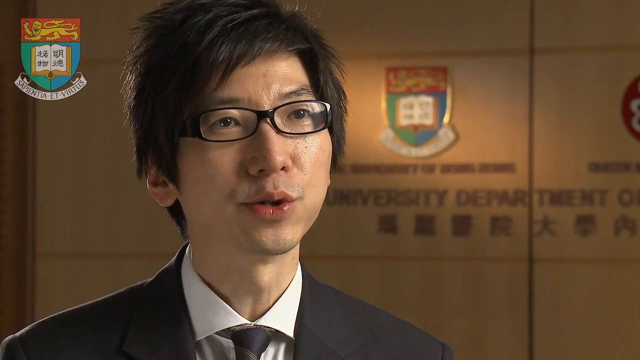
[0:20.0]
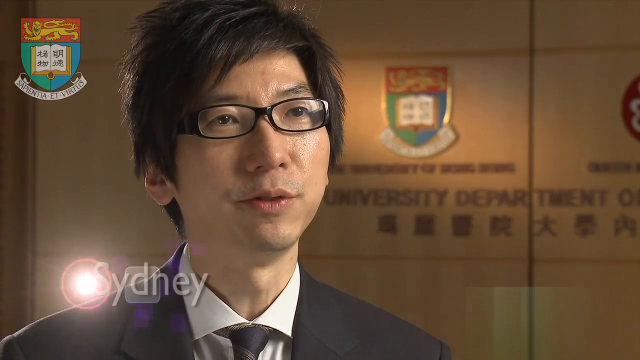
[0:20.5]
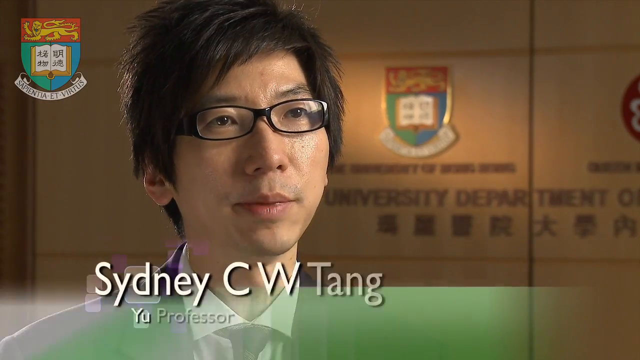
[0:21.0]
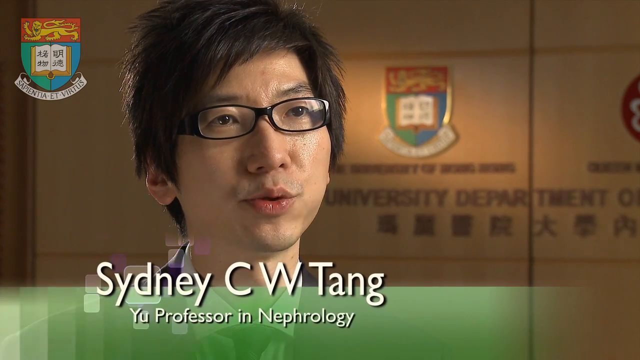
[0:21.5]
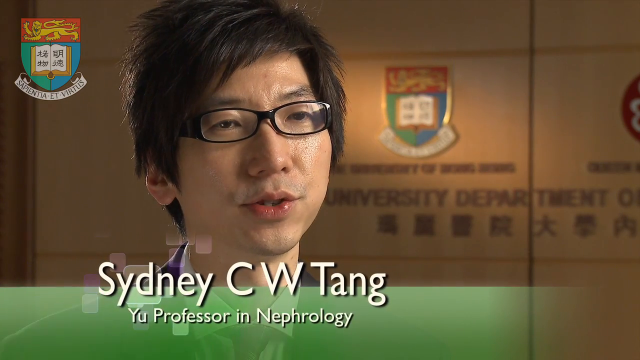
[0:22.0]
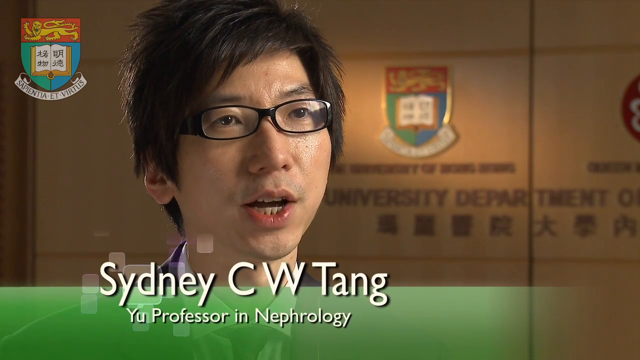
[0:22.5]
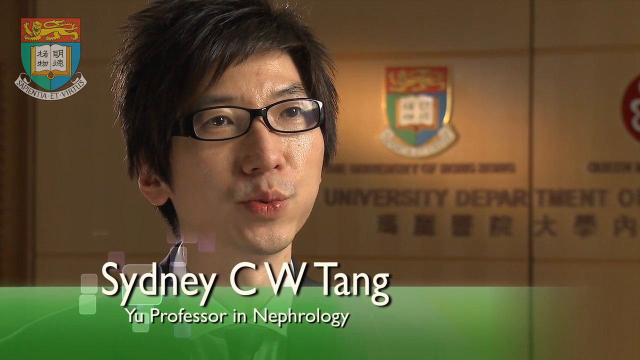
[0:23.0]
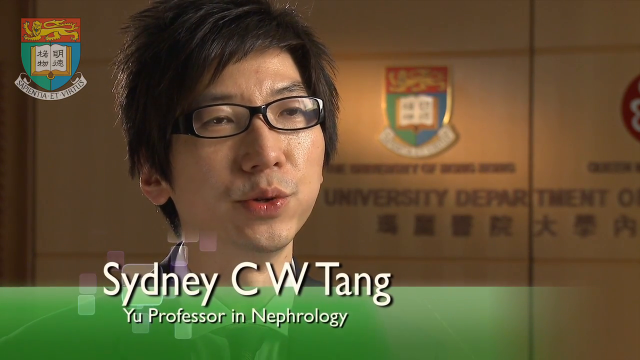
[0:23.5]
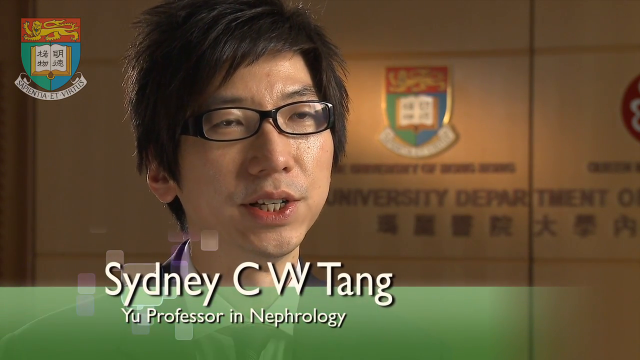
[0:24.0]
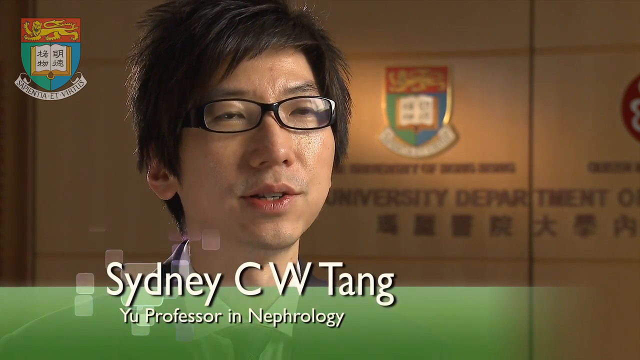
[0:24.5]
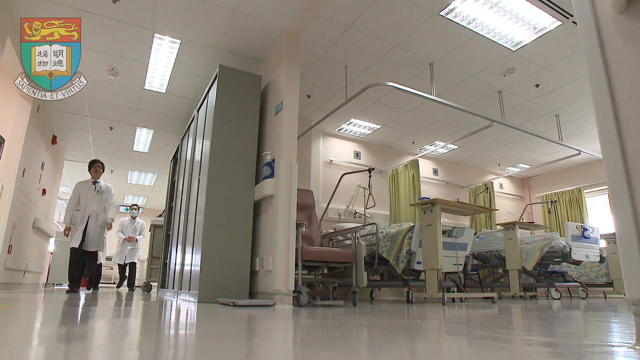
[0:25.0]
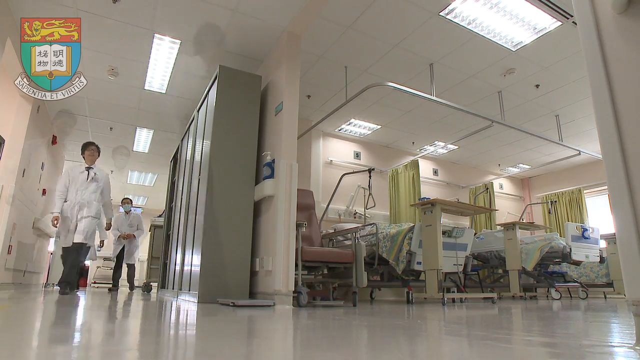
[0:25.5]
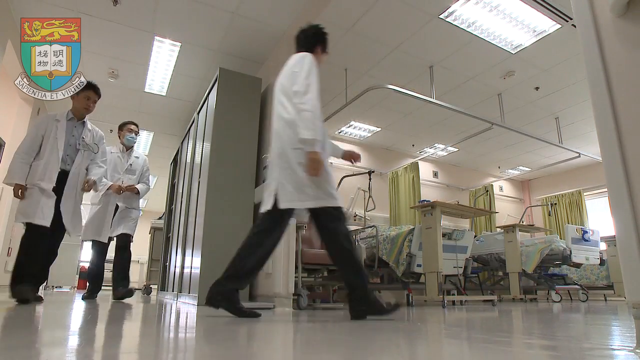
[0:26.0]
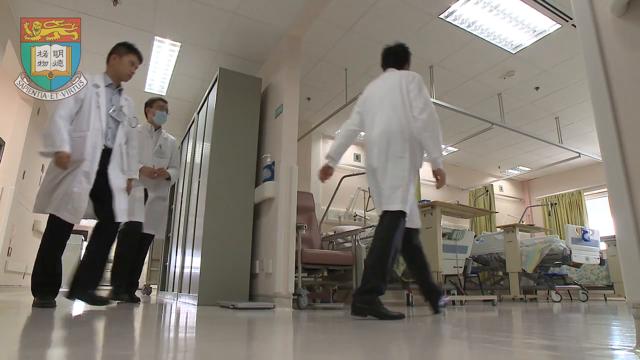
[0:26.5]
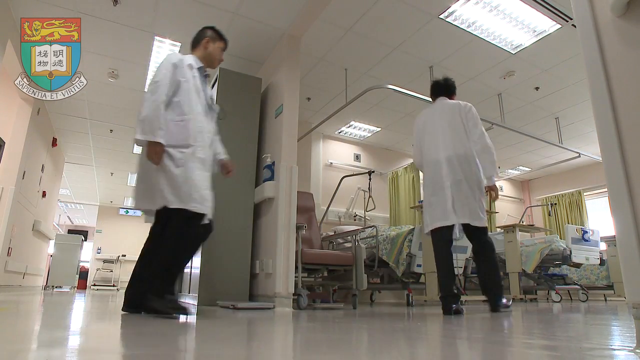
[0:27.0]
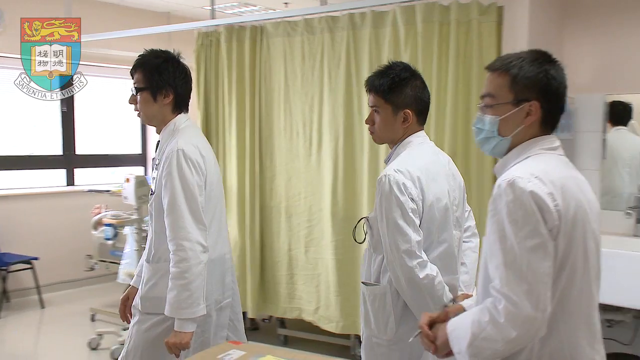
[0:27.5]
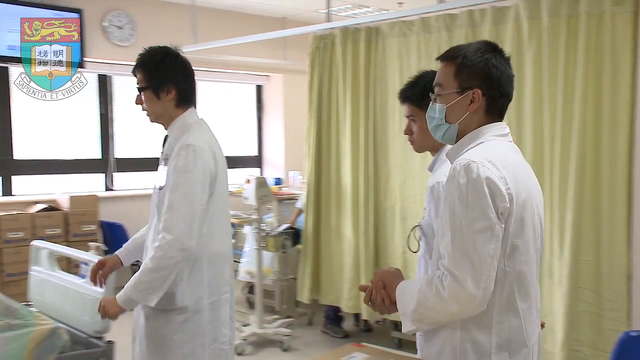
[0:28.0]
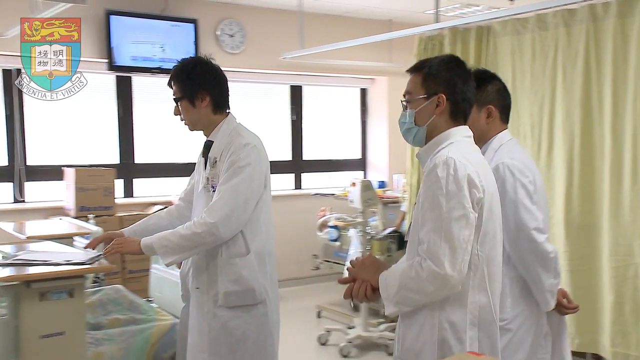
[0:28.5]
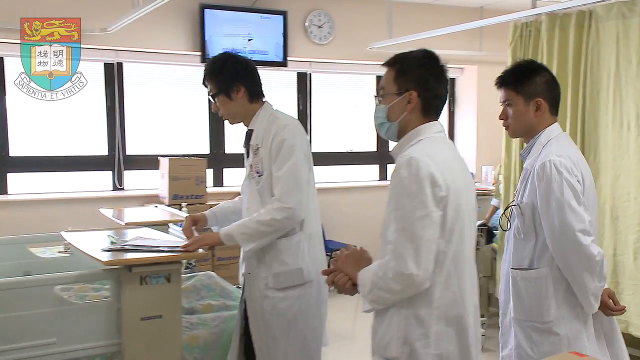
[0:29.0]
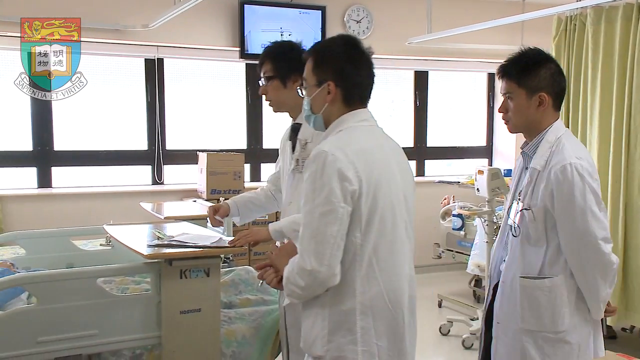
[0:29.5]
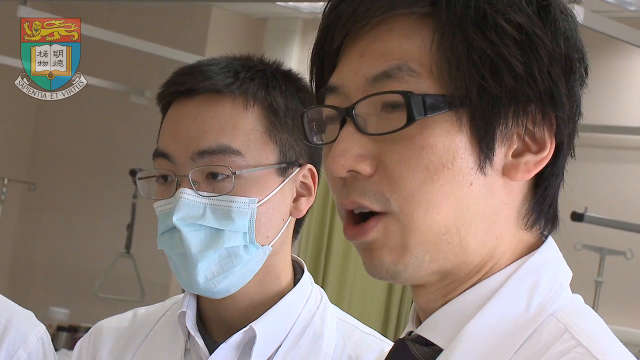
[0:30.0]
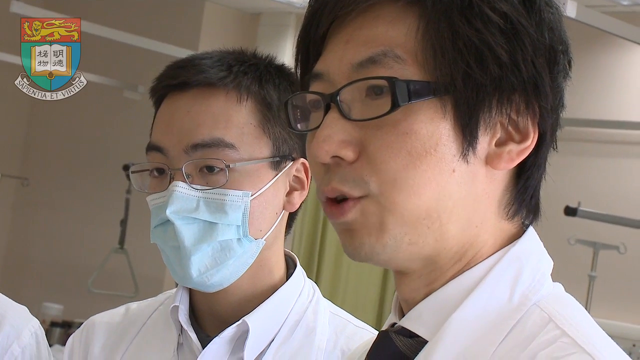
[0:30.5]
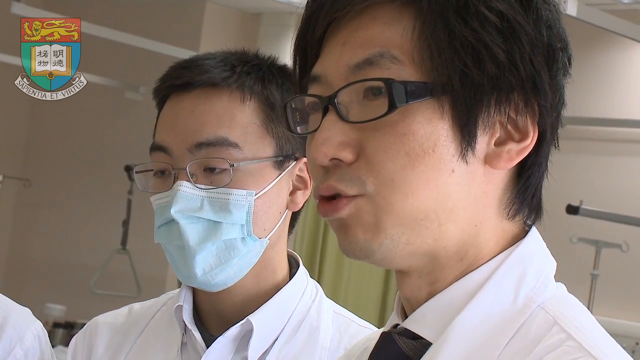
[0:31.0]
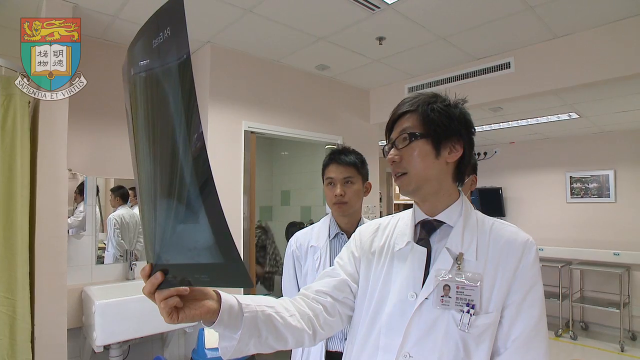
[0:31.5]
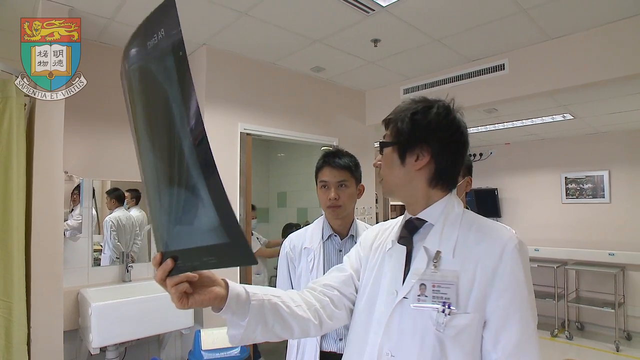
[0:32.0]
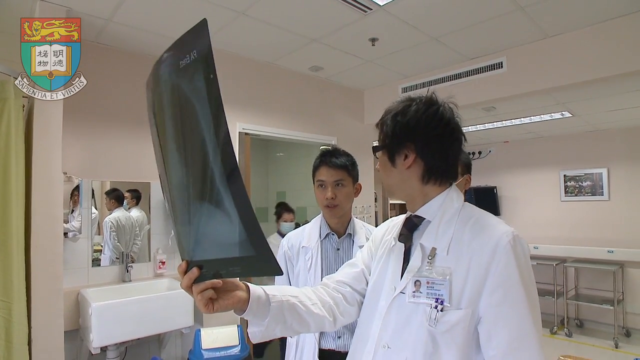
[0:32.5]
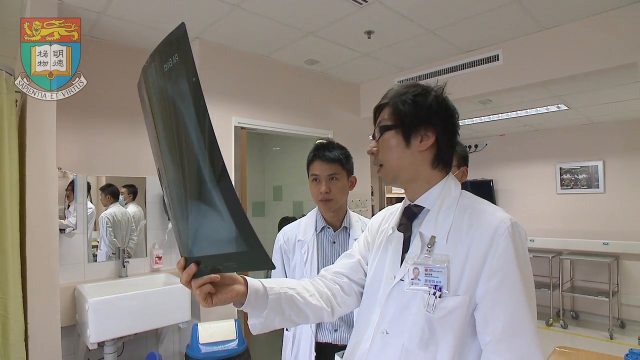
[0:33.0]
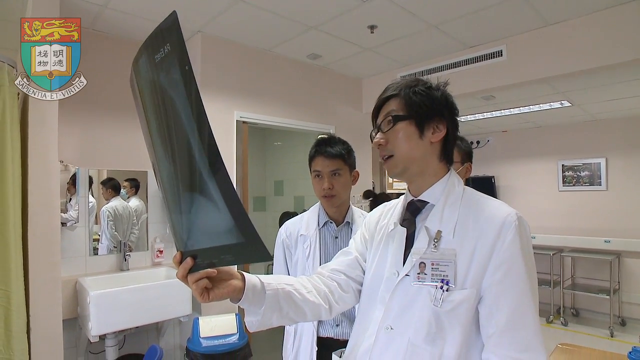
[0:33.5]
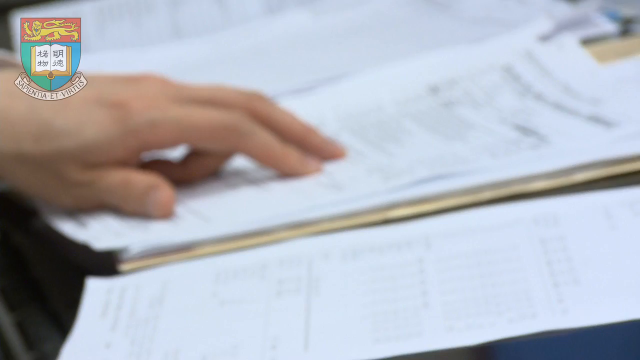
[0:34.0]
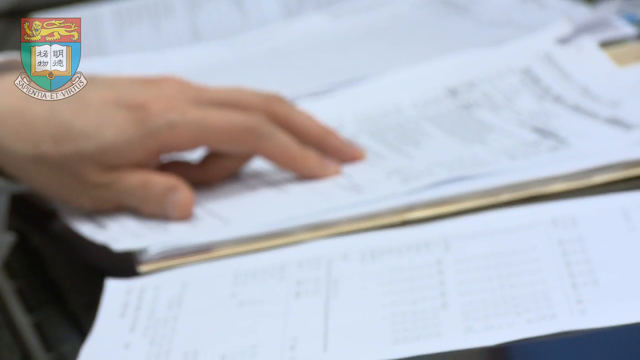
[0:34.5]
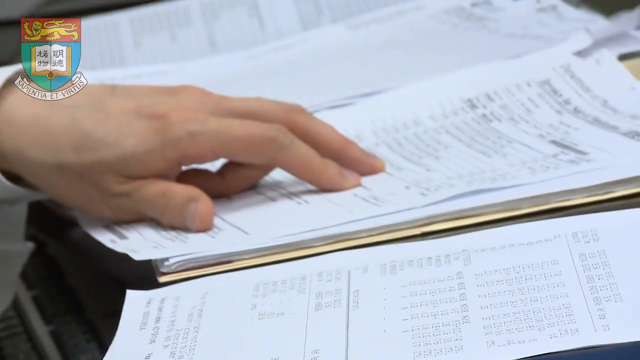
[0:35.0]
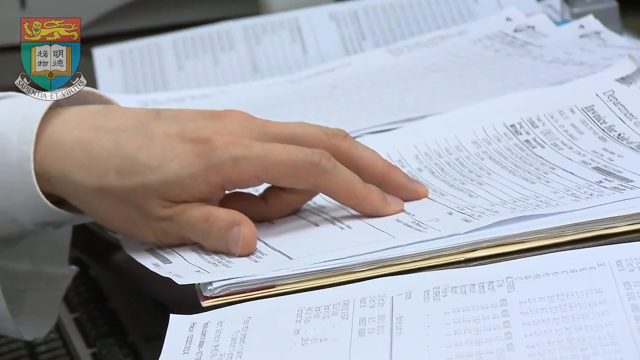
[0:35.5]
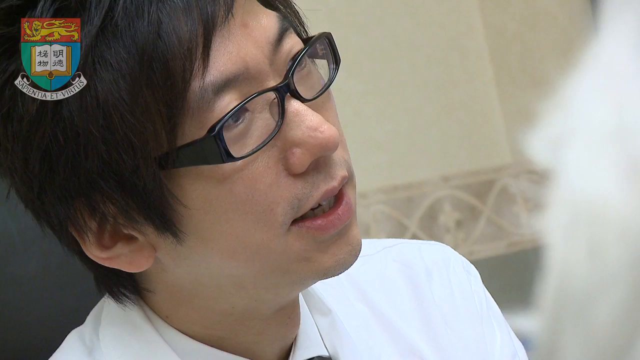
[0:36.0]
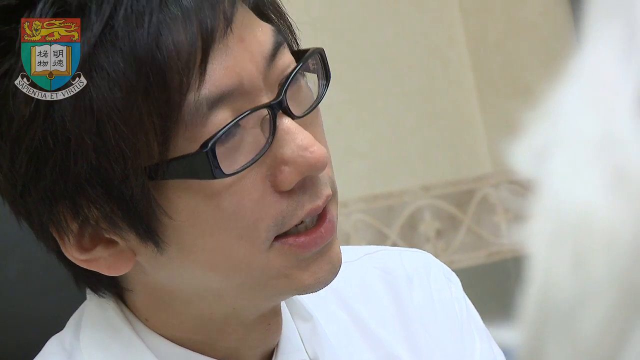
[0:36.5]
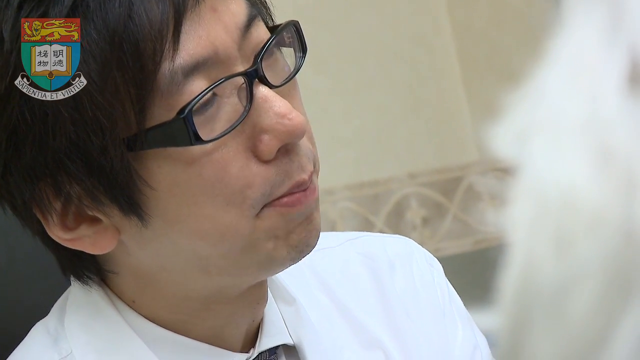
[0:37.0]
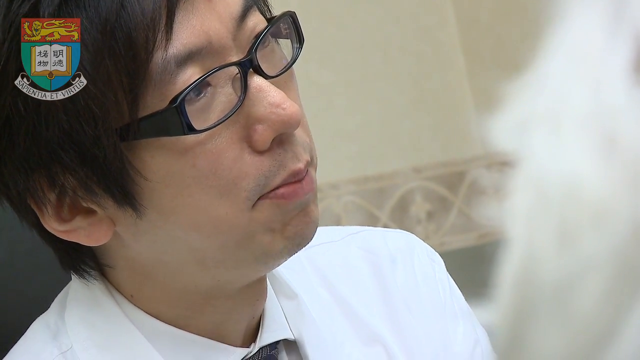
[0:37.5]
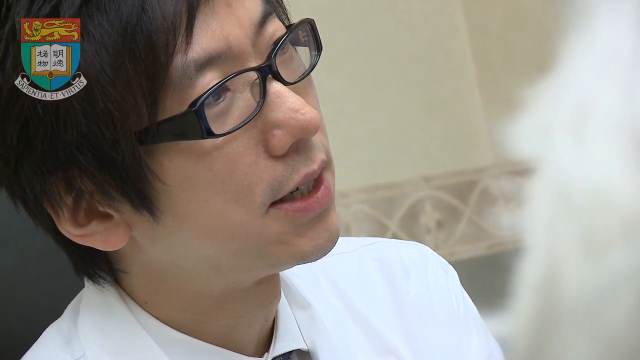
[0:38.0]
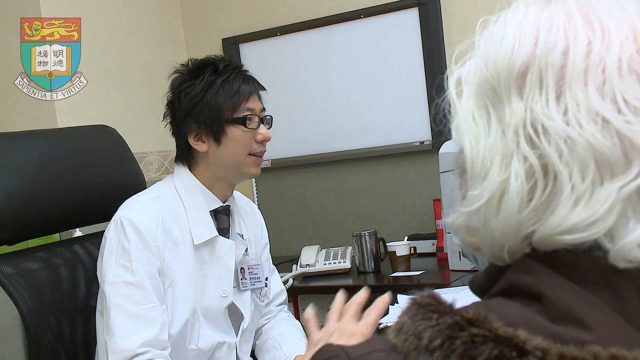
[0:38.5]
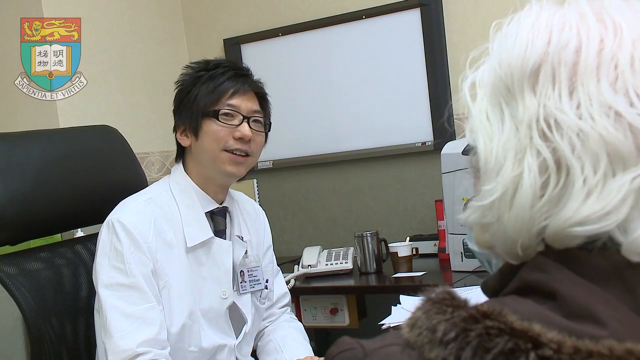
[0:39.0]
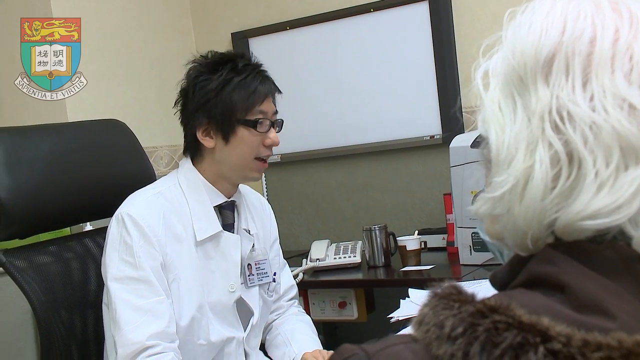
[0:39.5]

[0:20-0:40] A young Asian man with short black hair and glasses sits in front of the camera, speaking to it. His name appears as "Sydney C. W. Tang," and he is identified as a "Yu professor in Nephrology." Behind him on the wall are a pennant and lettering identifying the location as part of the university. The scene shifts to a hallway of what is presumably a hospital, where three men walk down the hallway, led by Mr. Tang, toward a bay of hospital beds. Arriving at the beds, they look at paperwork and talk to one another, with Mr. Tang appearing to instruct. He is shown looking at an x-ray as well as invoice paperwork. The video then cuts to Mr. Tang sitting at a desk, where he appears to be speaking to two individuals, very likely in a diagnostic setting.